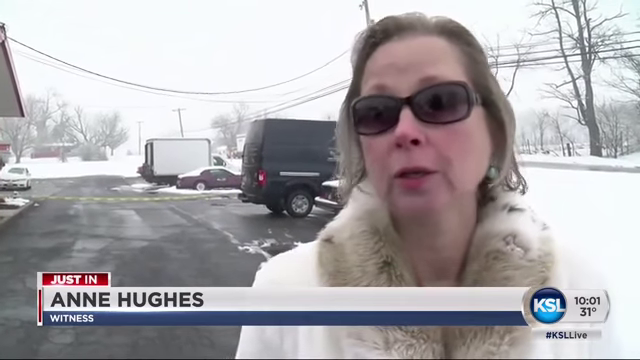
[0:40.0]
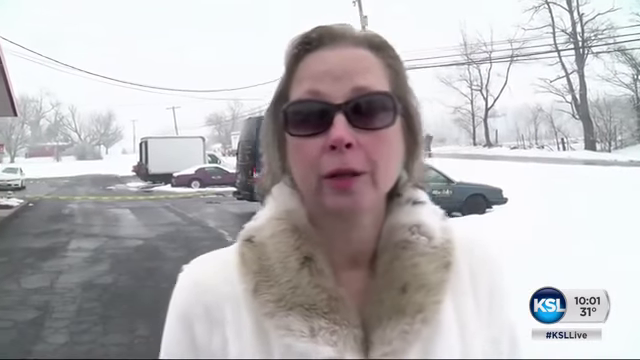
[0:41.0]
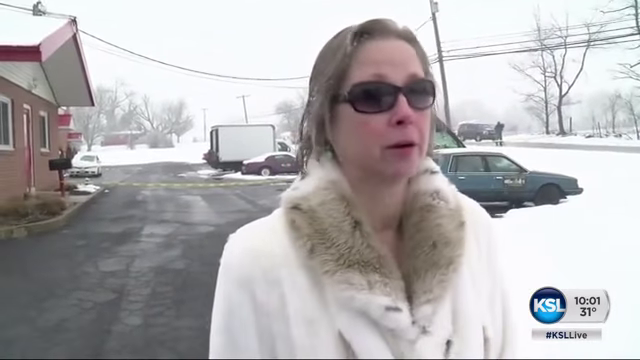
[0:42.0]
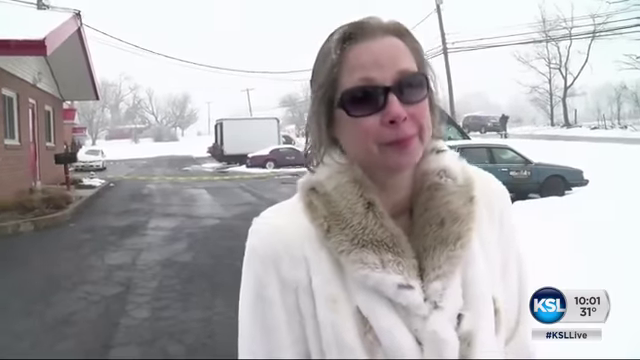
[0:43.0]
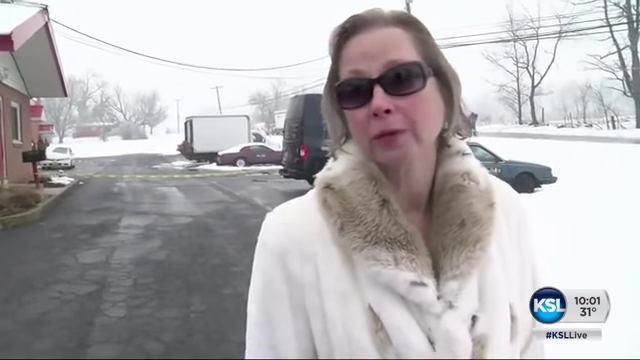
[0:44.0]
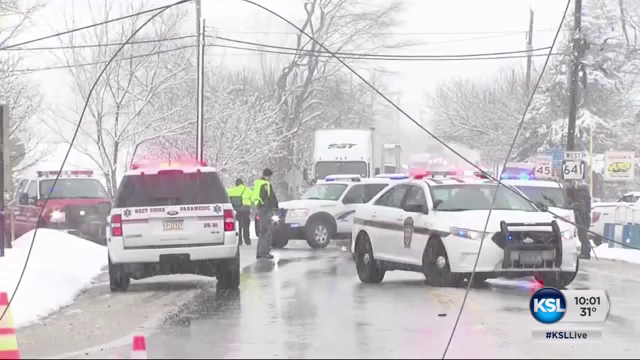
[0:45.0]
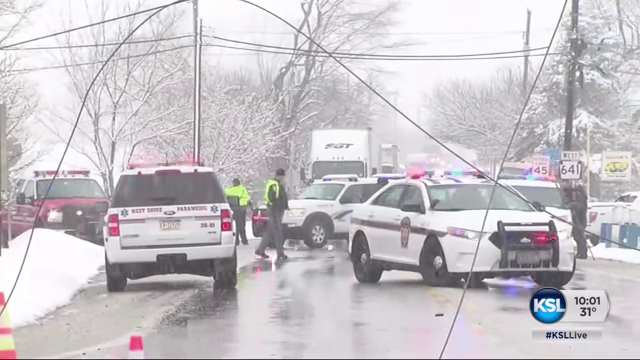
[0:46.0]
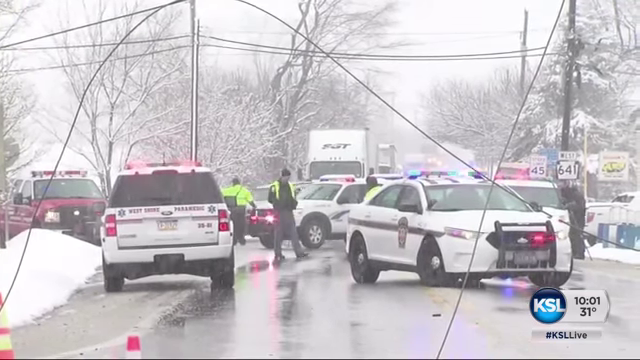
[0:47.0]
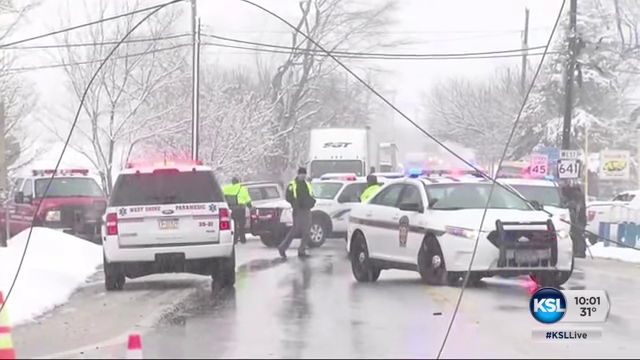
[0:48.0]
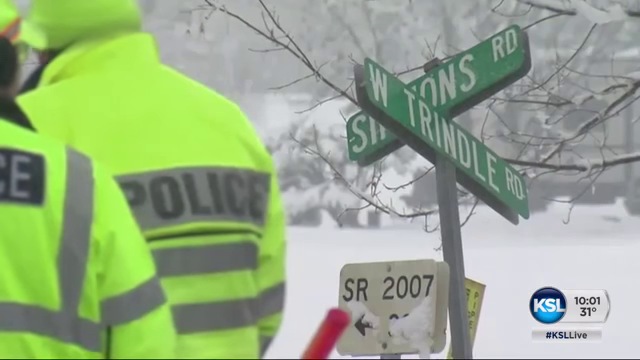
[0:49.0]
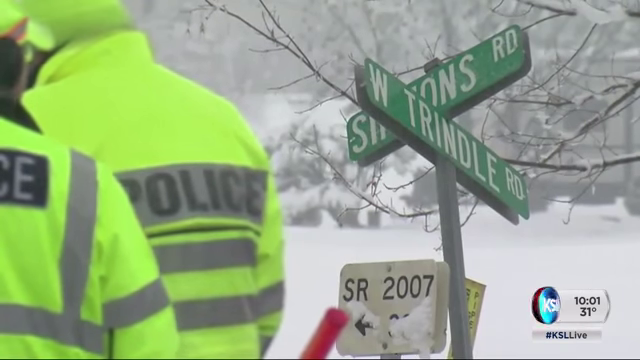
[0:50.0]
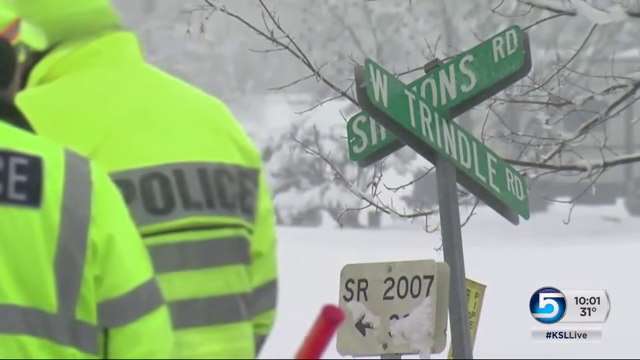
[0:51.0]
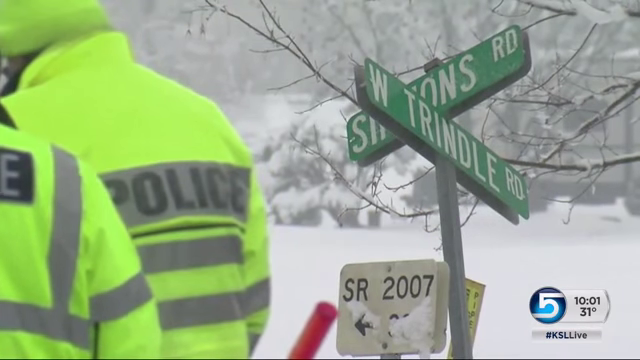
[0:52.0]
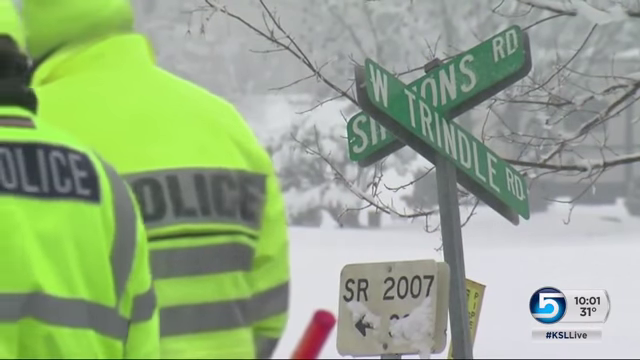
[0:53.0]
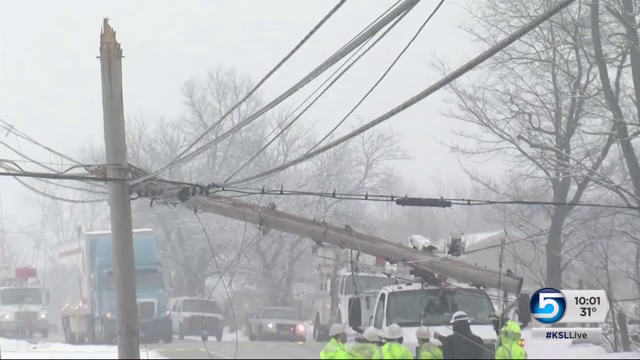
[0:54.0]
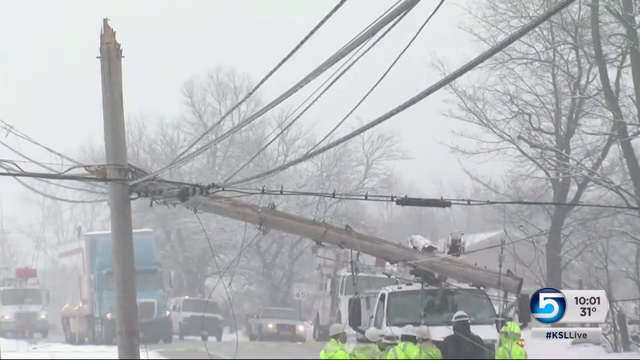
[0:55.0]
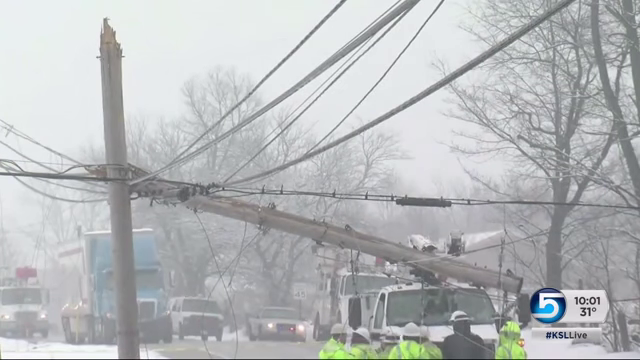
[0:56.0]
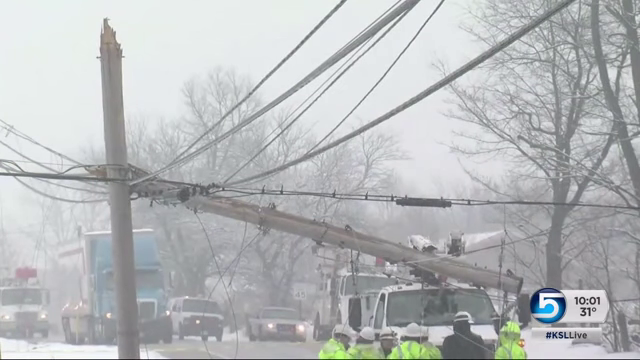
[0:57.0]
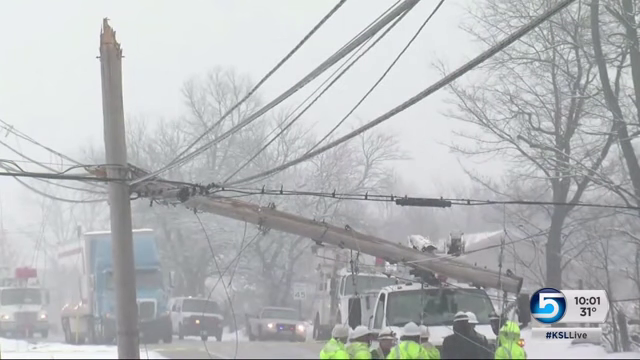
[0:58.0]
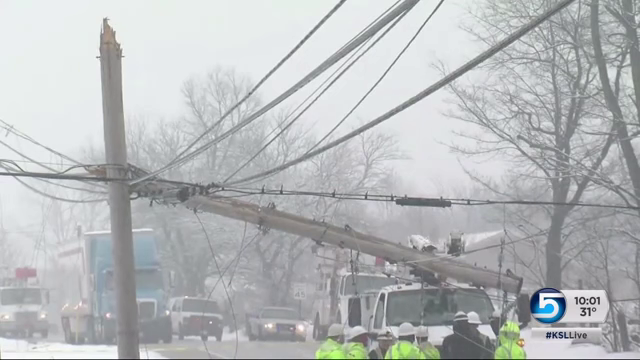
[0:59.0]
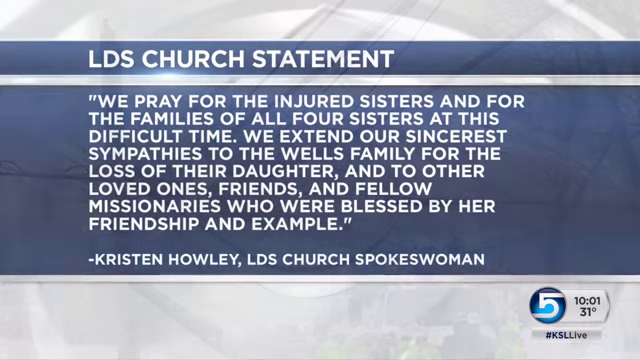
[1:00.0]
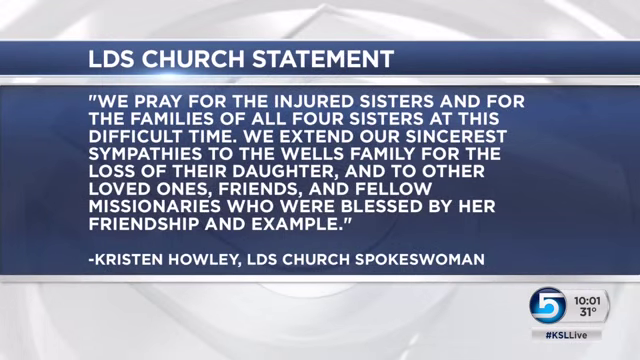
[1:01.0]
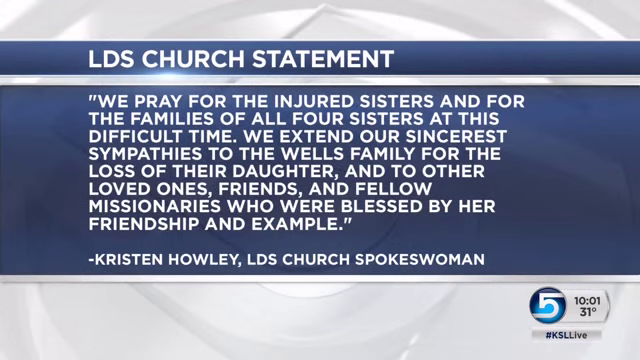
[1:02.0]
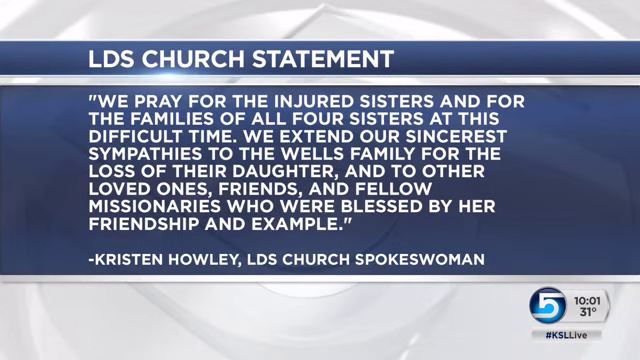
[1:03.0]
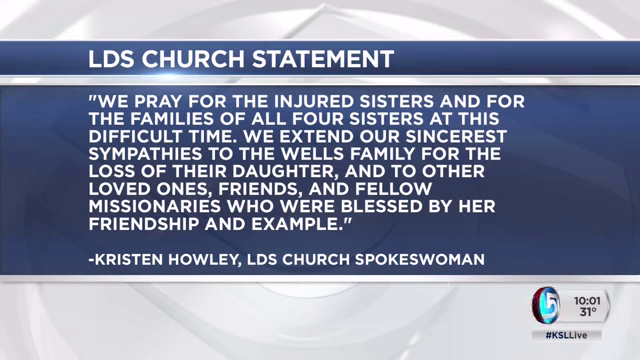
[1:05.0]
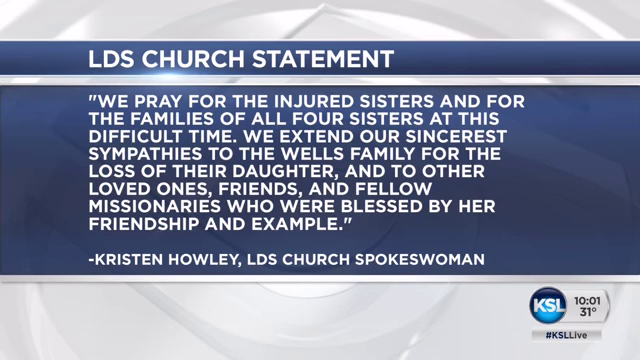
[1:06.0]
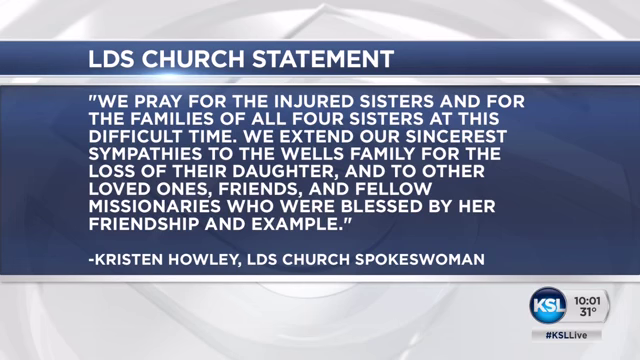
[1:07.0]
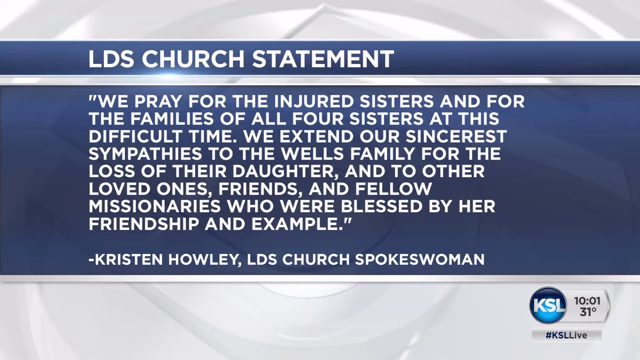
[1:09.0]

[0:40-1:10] The interview with Anne Hughes continues. It is snowing, with a lot of snowflakes falling in front of her face, and the ground behind her is white. She kind of steps backwards, looking really upset, kind of shrugs her shoulders, and then turns toward the left side of the screen. The video cuts to footage of a bunch of police cars outside, with a bunch of officers kind of stepping or walking around. Even more snow is falling, and the trees in the back are covered in snow. The camera zooms in on the street names; one looks like it says "West Trindle Road," and another street name is hard to see. Some police jackets are visible on the left side of the image. More snow falls, and there is some footage of the sky. The video then cuts to a statement from the LDS church.